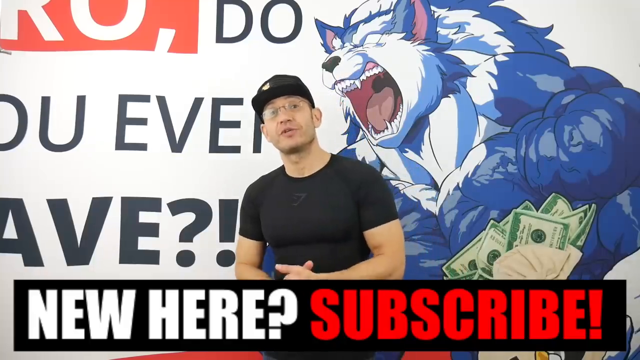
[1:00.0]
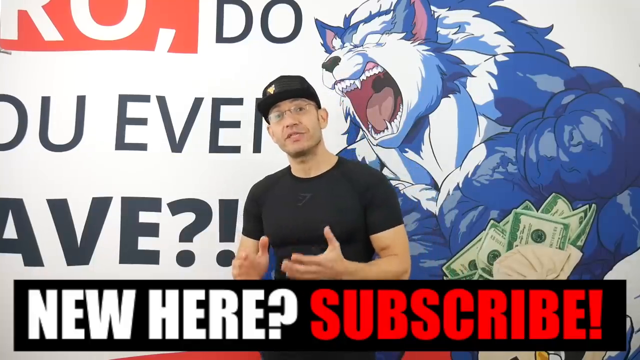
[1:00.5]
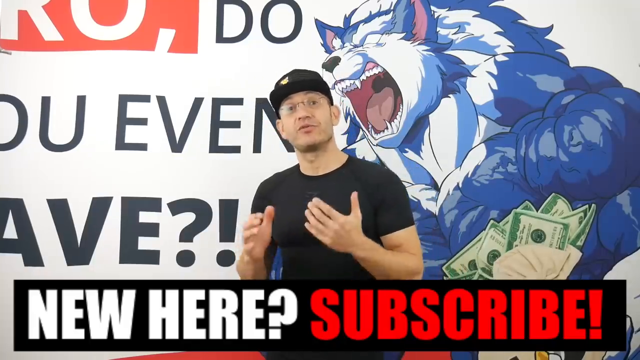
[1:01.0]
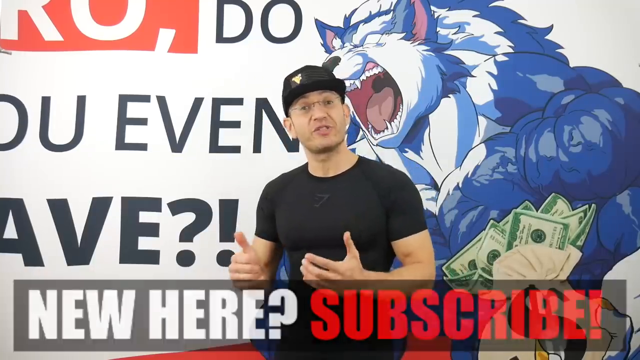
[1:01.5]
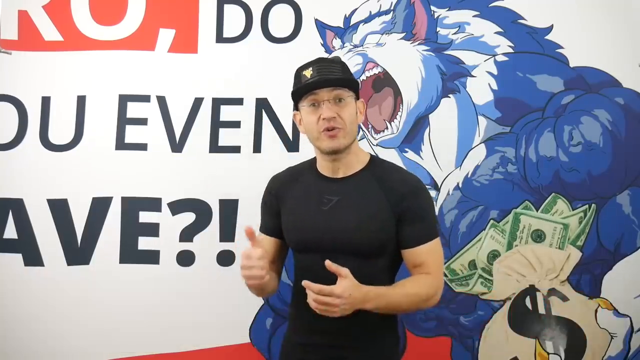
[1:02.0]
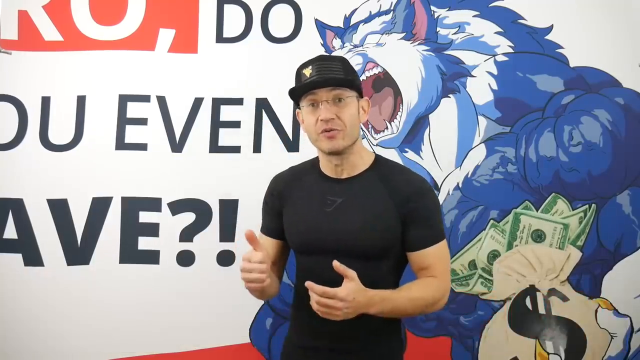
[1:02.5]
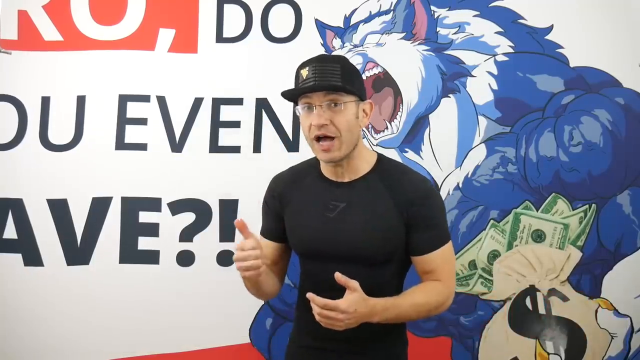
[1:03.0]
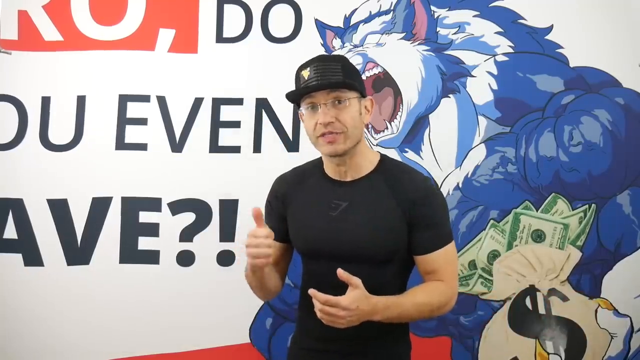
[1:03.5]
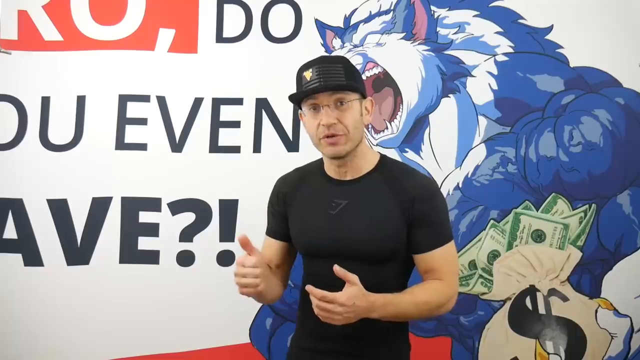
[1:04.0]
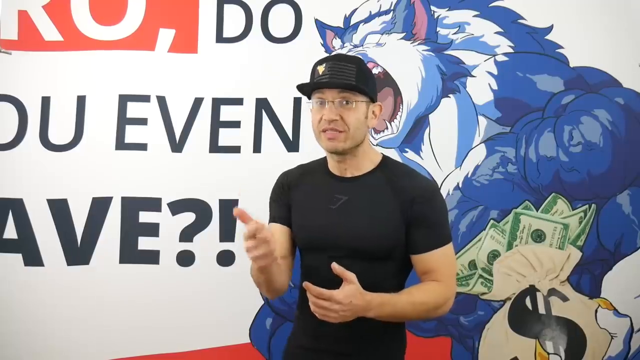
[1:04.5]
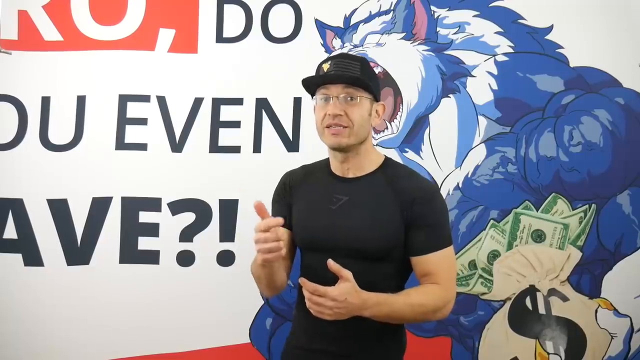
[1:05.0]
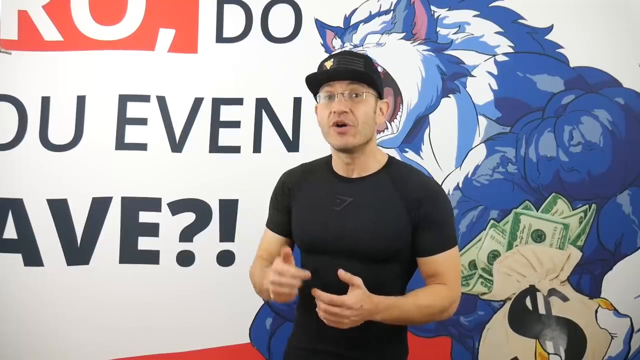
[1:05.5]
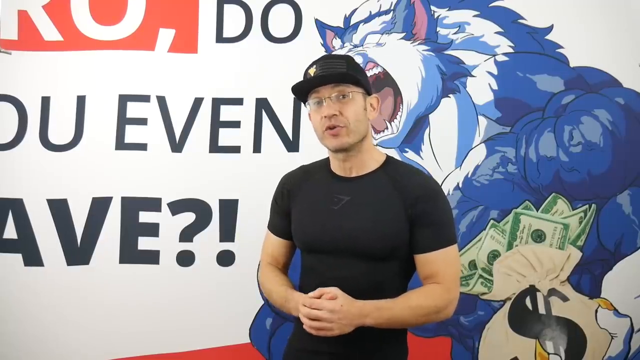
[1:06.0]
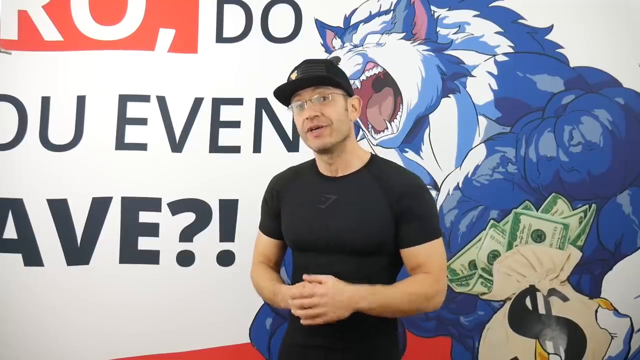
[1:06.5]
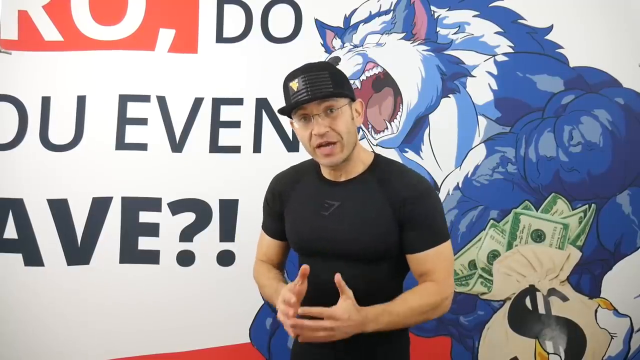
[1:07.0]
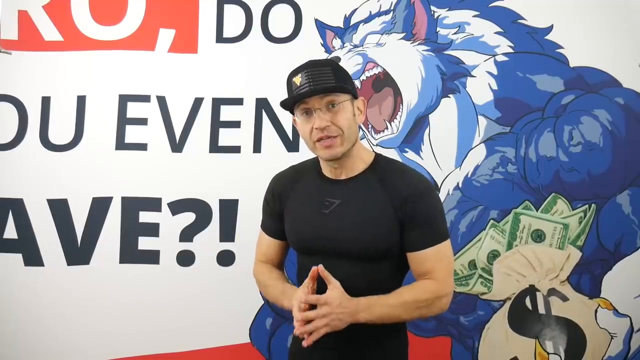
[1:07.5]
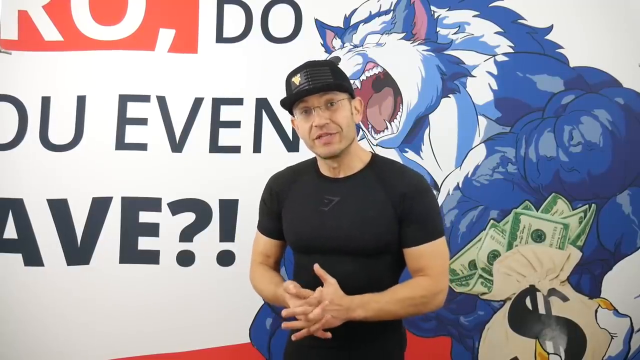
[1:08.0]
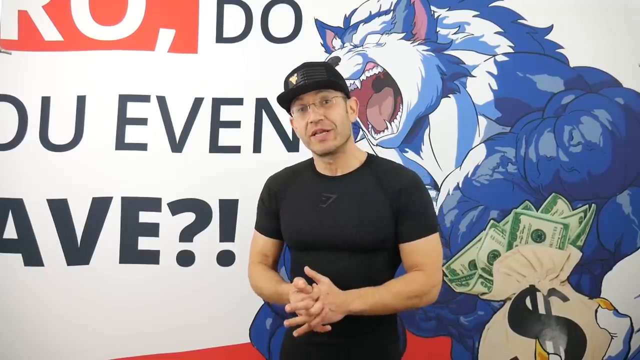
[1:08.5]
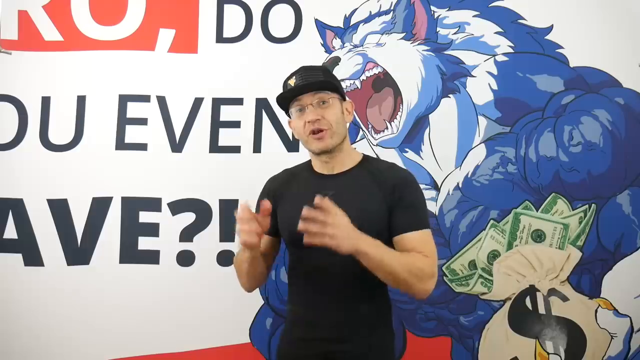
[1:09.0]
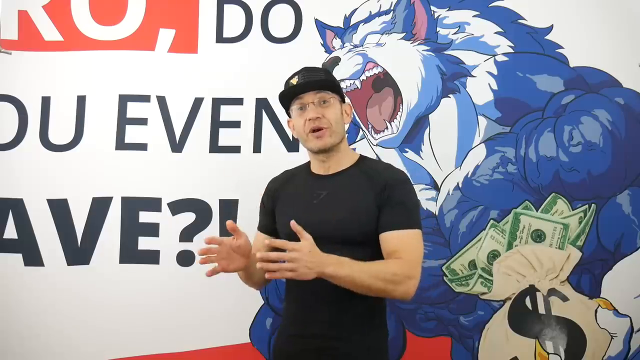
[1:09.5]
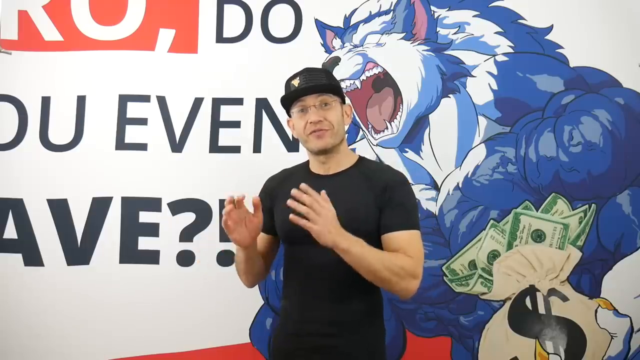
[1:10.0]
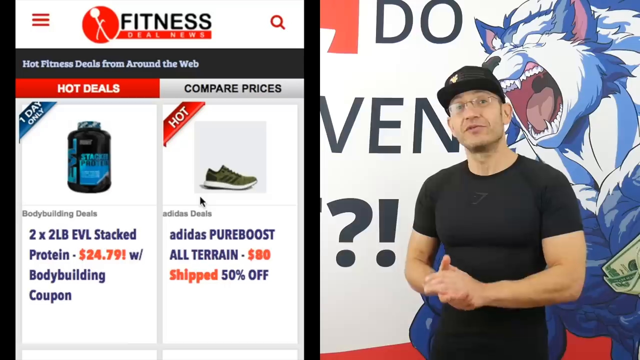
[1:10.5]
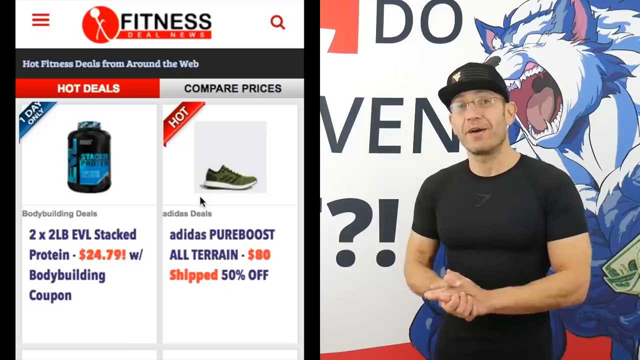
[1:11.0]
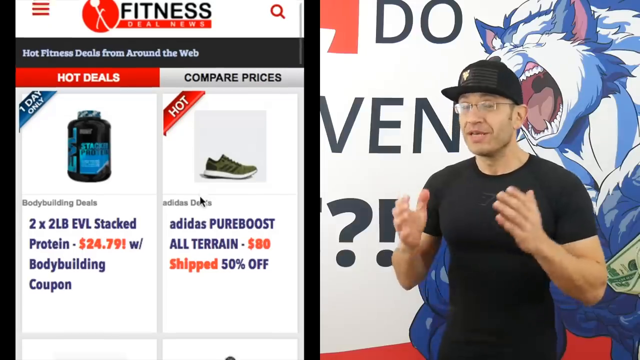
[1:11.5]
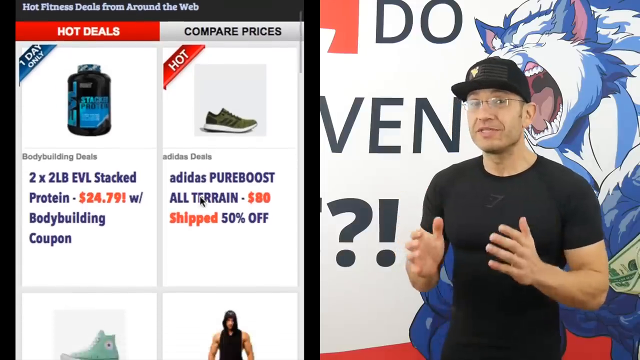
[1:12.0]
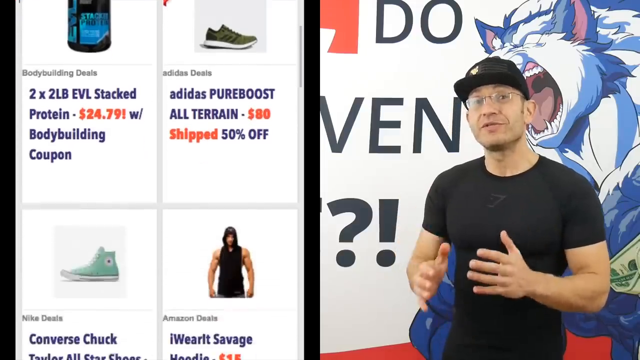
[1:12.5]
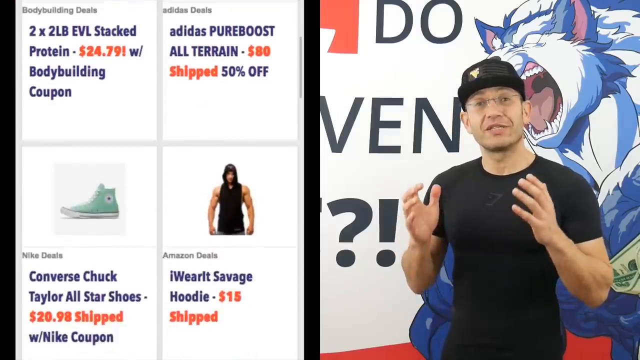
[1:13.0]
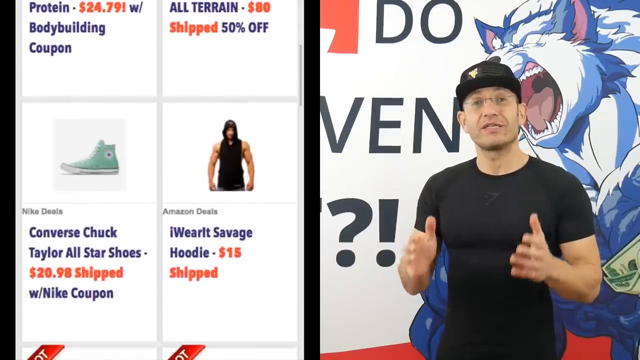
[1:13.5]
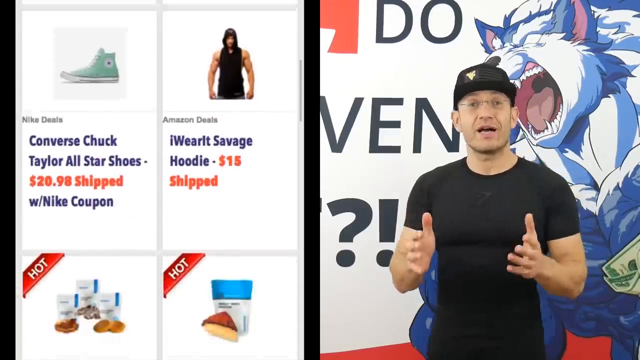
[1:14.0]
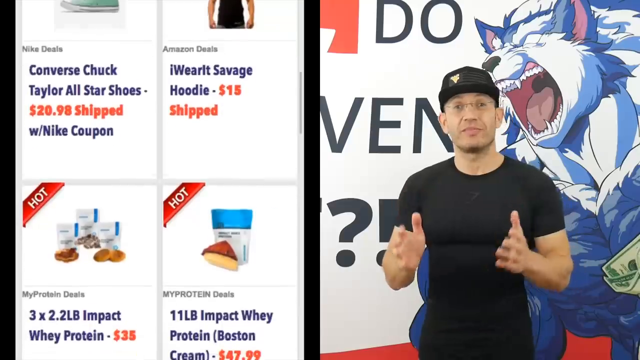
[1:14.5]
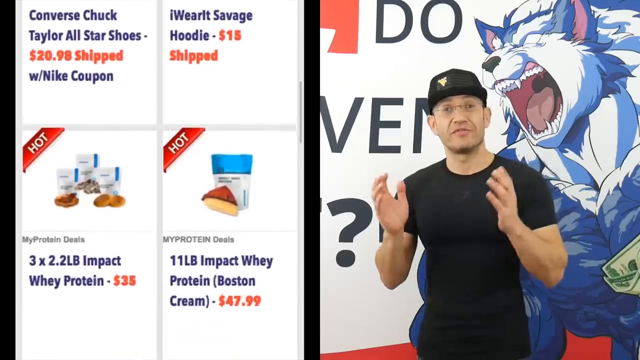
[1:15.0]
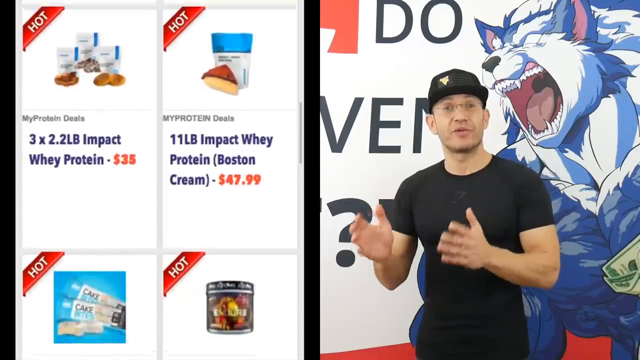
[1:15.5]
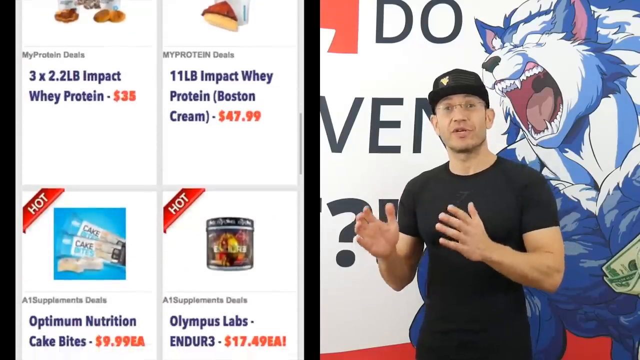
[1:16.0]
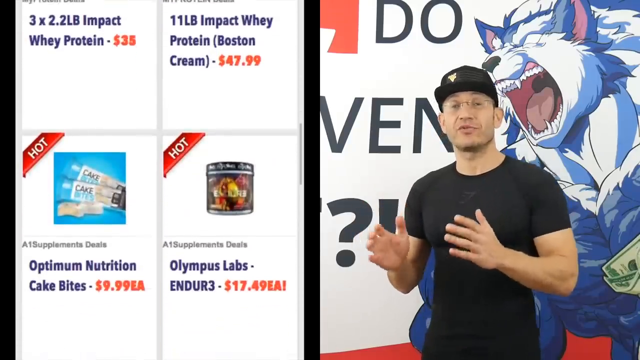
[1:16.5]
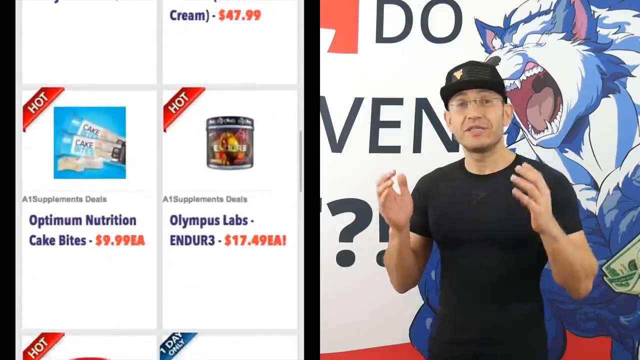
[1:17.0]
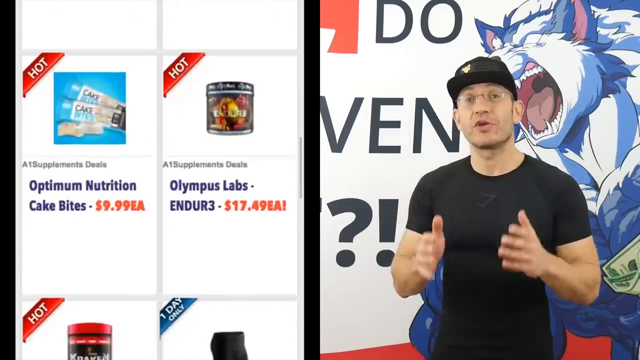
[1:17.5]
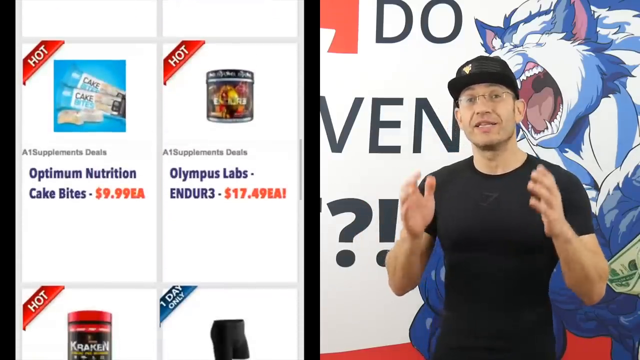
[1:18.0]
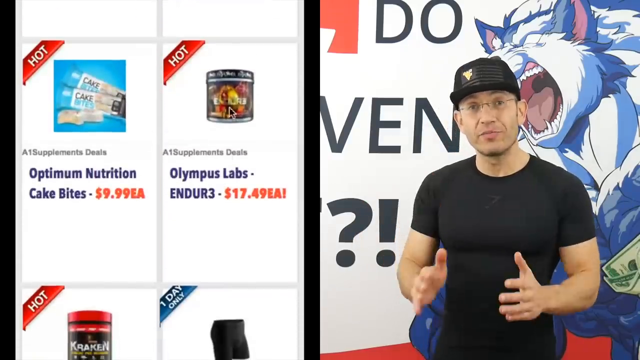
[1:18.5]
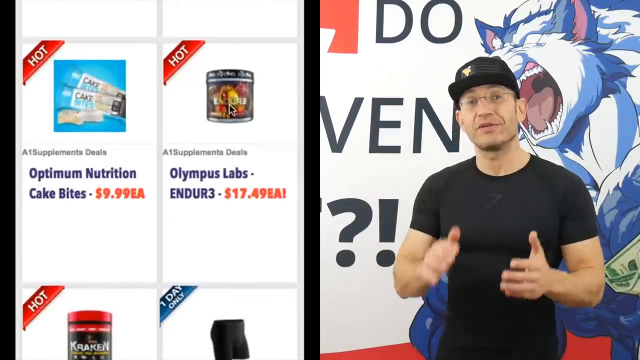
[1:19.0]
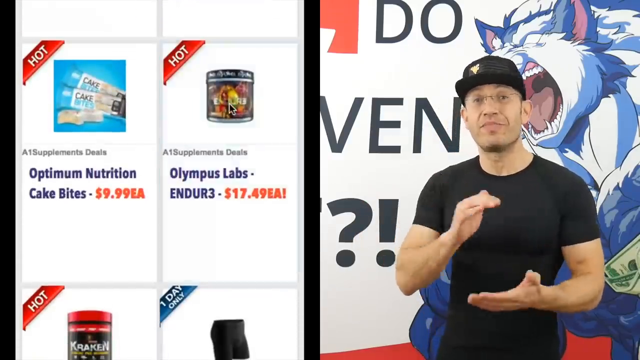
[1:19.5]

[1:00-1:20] A man in a short-sleeved black shirt and a black hat speaks to the camera. He stands in front of a backdrop with words on the left side, most of them cut off, and on the right side an animated humanoid wolf character, large and muscular, growling and holding a bag of money in one of his hands. Across the bottom of the screen, a text bar says "New here? Subscribe!" The man gestures a lot with his hands, and at one point it looks like he is counting off items with his fingers. At one point, a page appears on the left side of the screen that looks like a website for shopping for fitness items. At the top it says "Fitness Deal News," with banners that say "Hot Deals" and "Compare Prices." A jar of protein powder, shoes and snacks, among other items, are for sale. The items scroll past as the man continues to talk on the right side.